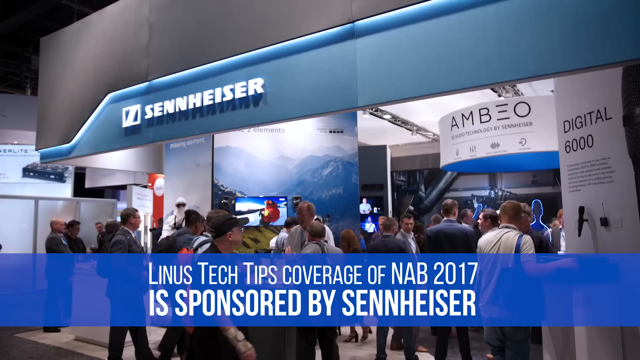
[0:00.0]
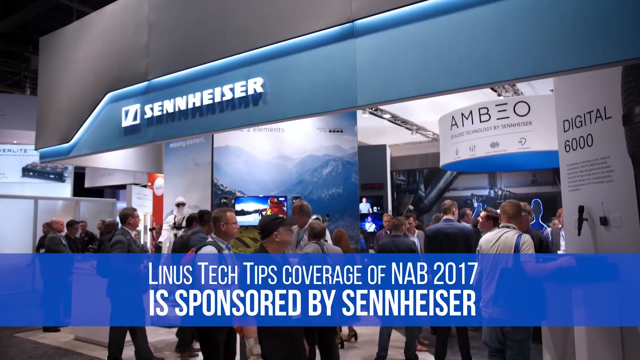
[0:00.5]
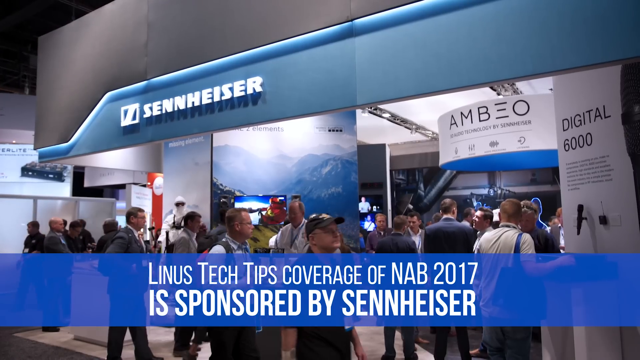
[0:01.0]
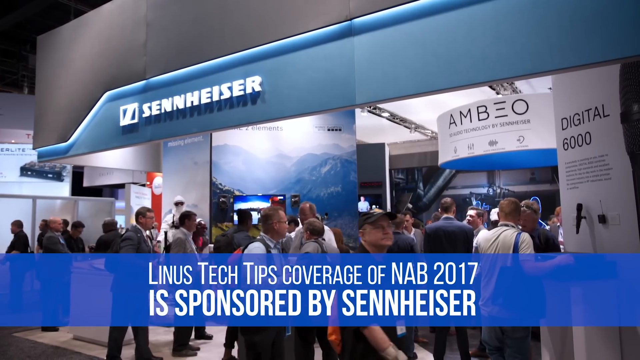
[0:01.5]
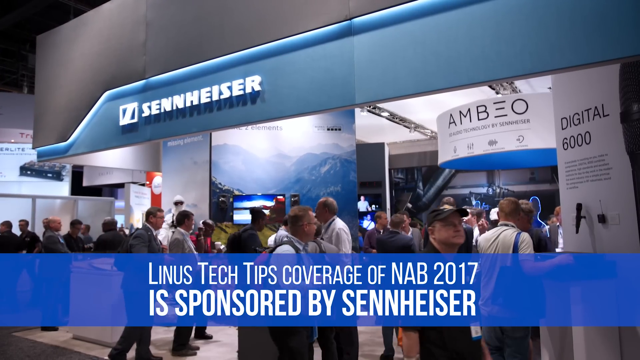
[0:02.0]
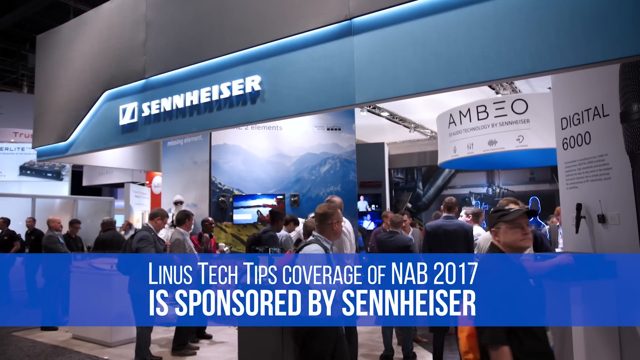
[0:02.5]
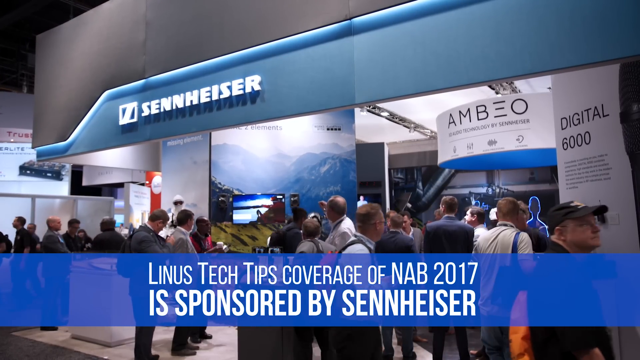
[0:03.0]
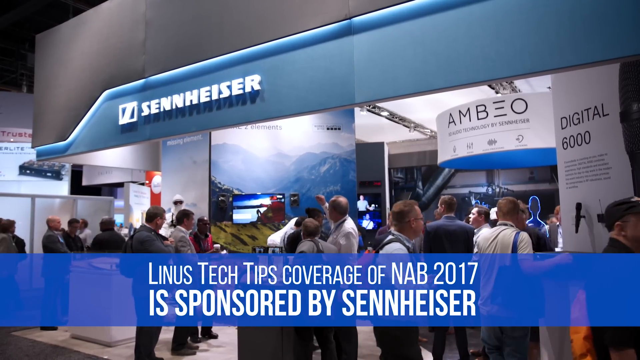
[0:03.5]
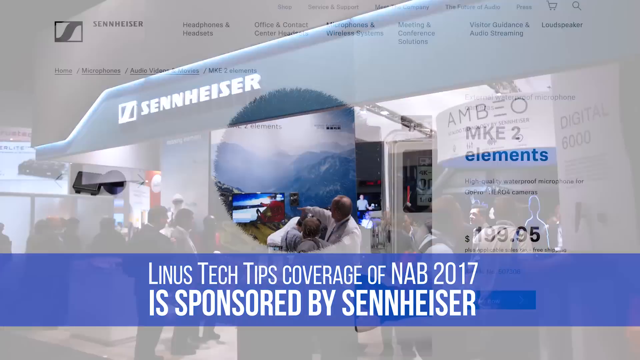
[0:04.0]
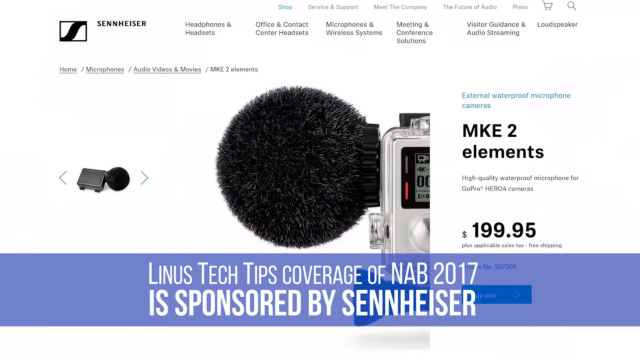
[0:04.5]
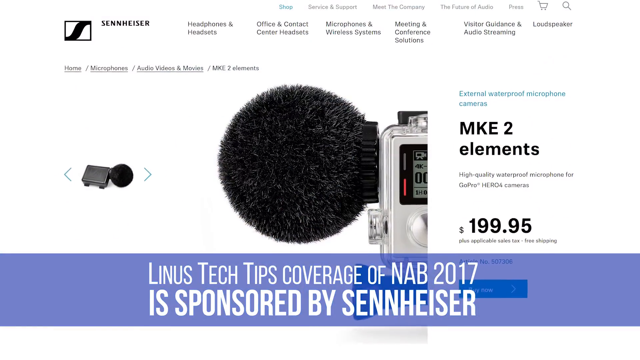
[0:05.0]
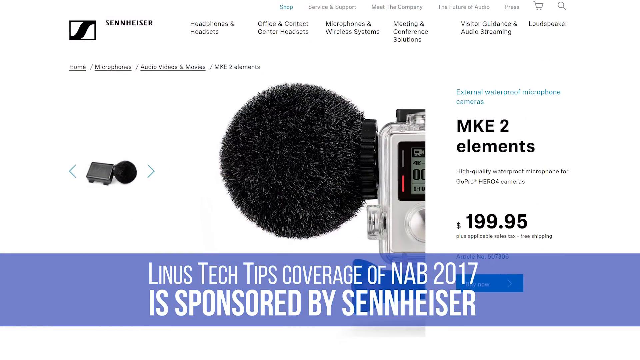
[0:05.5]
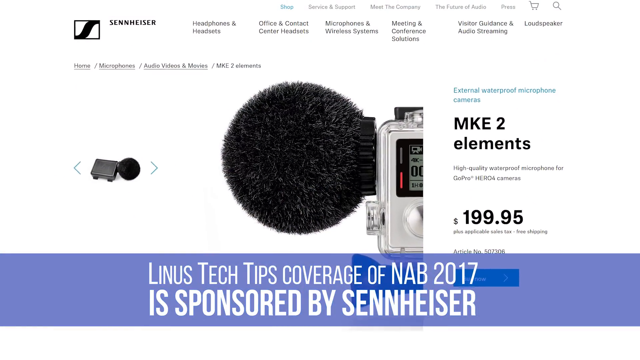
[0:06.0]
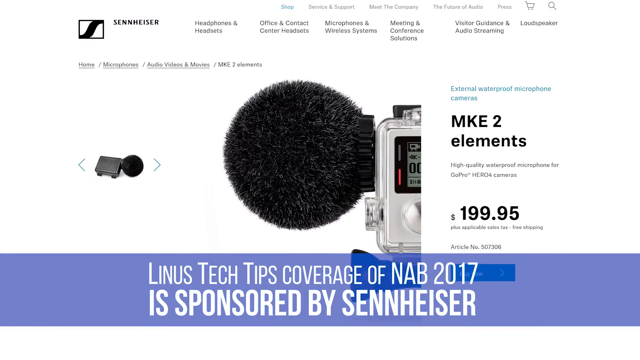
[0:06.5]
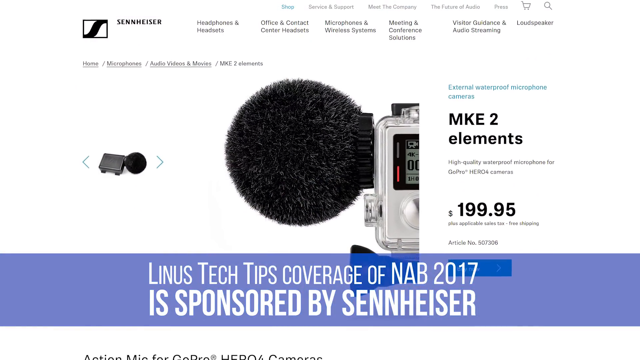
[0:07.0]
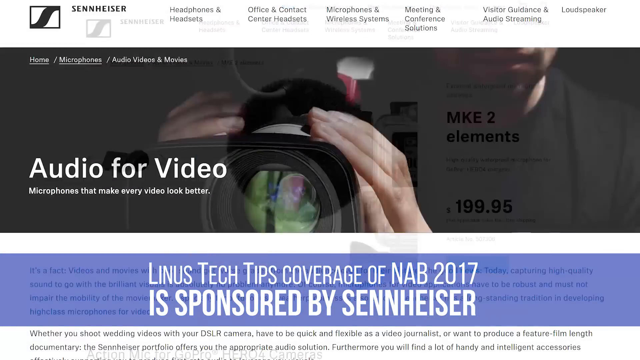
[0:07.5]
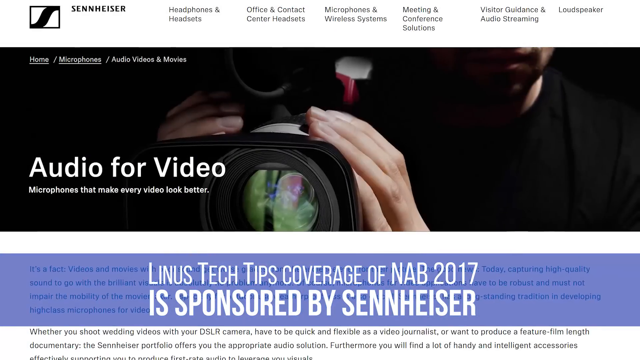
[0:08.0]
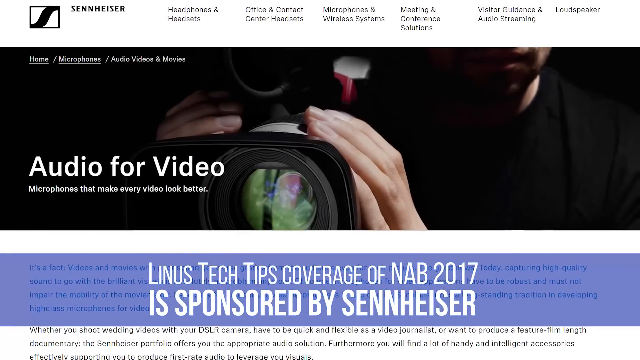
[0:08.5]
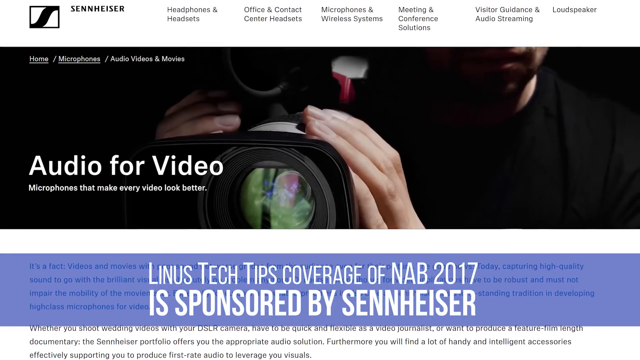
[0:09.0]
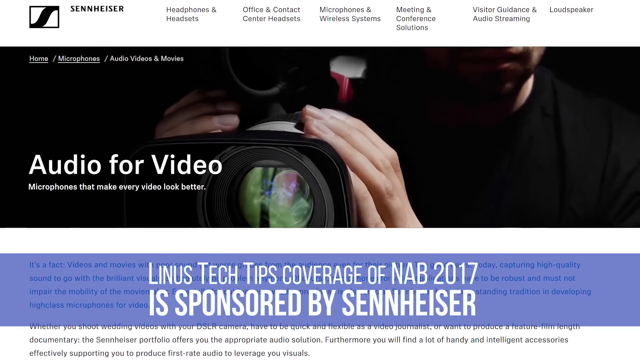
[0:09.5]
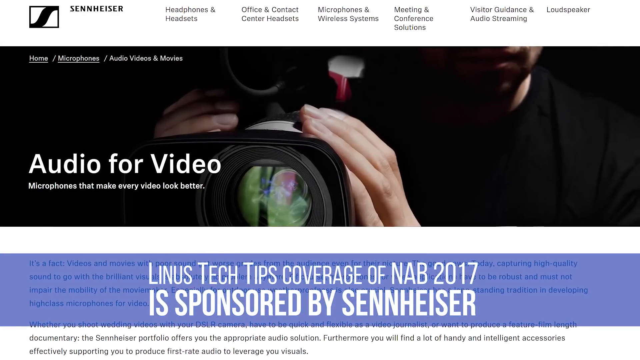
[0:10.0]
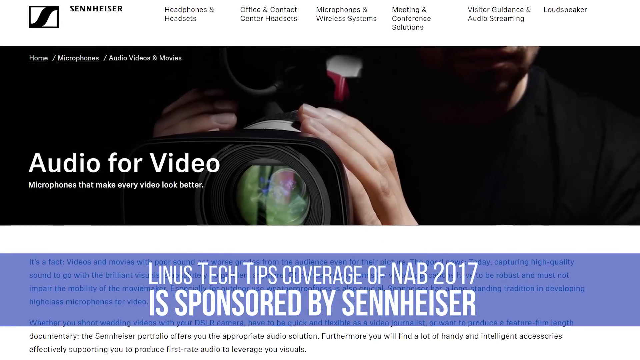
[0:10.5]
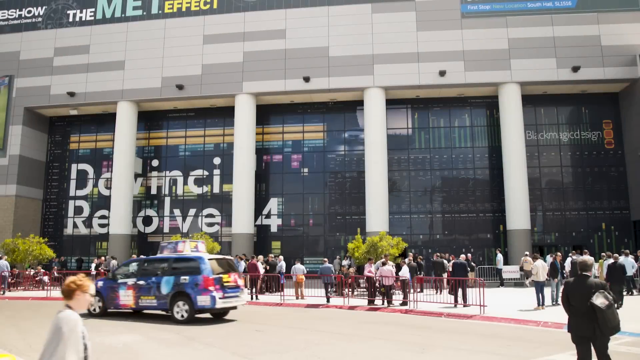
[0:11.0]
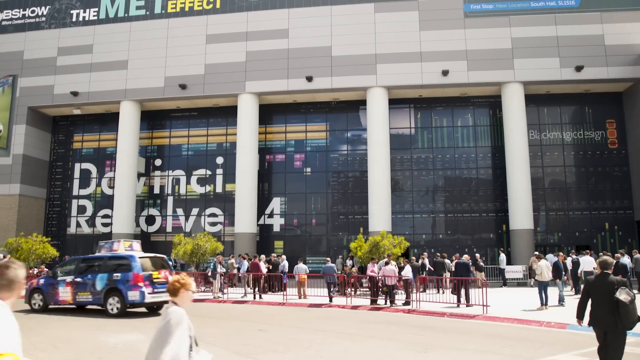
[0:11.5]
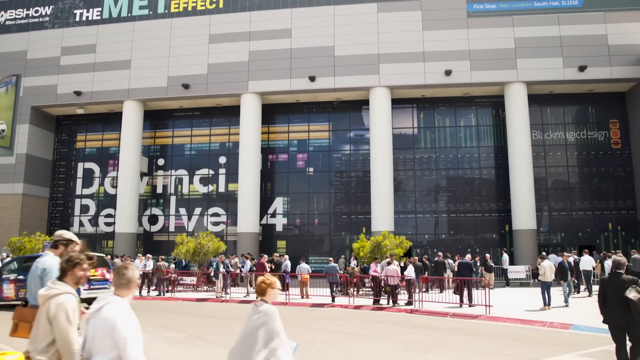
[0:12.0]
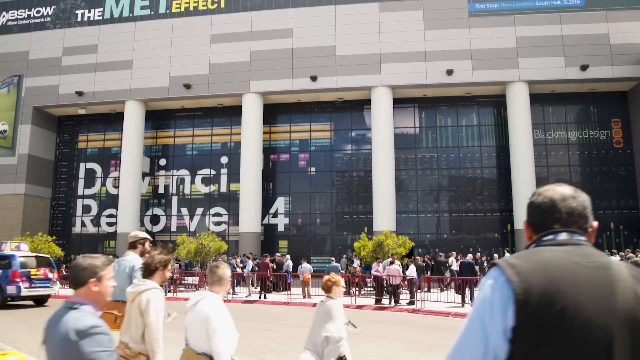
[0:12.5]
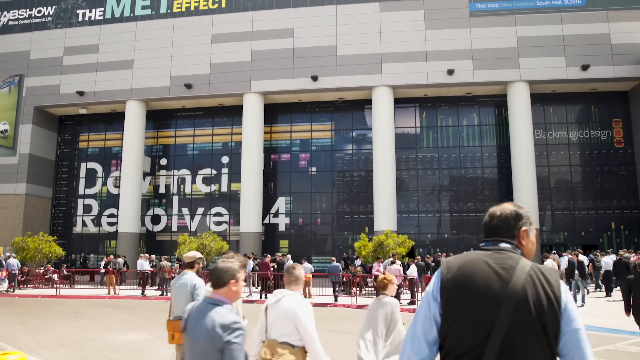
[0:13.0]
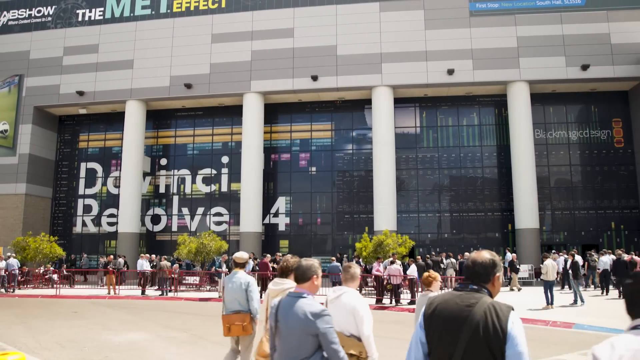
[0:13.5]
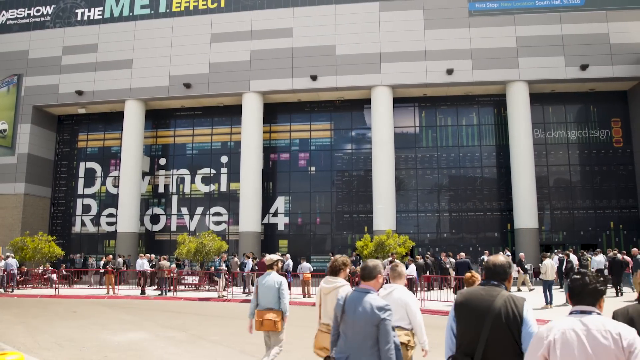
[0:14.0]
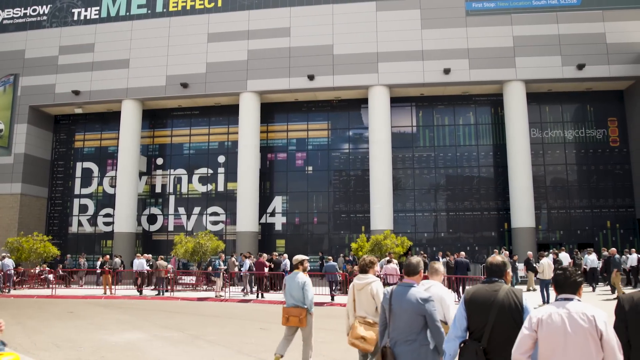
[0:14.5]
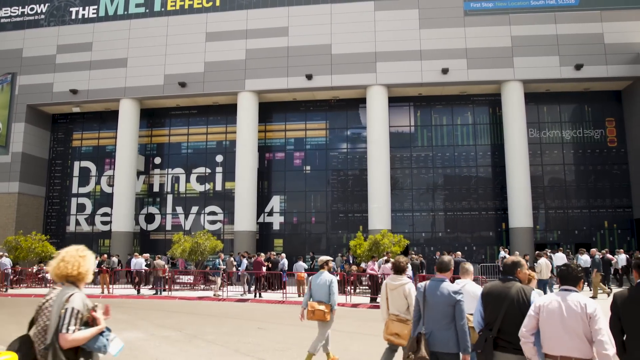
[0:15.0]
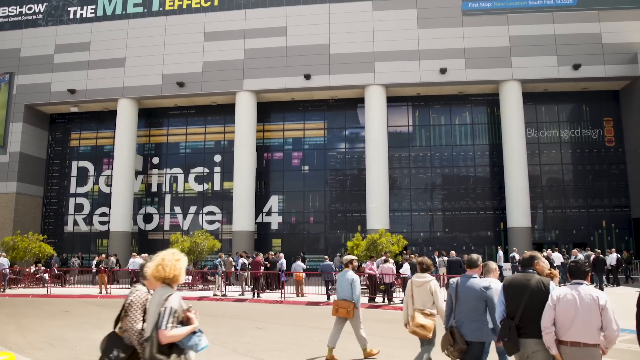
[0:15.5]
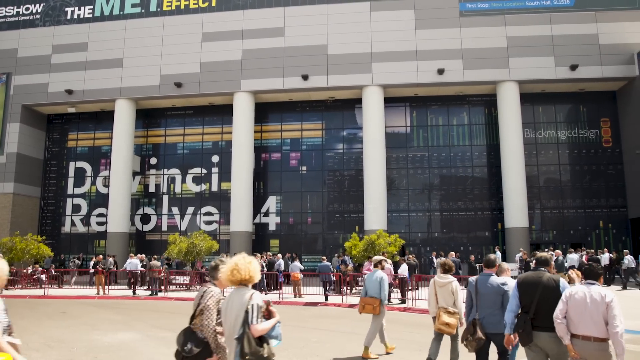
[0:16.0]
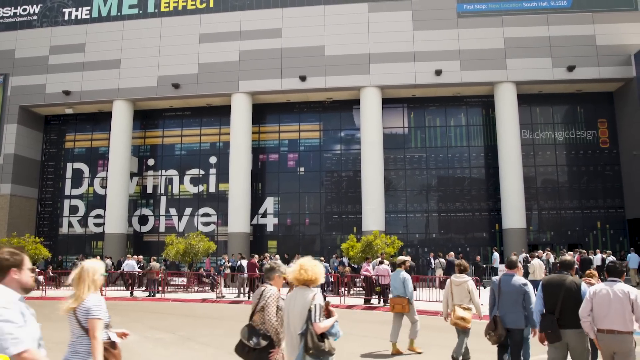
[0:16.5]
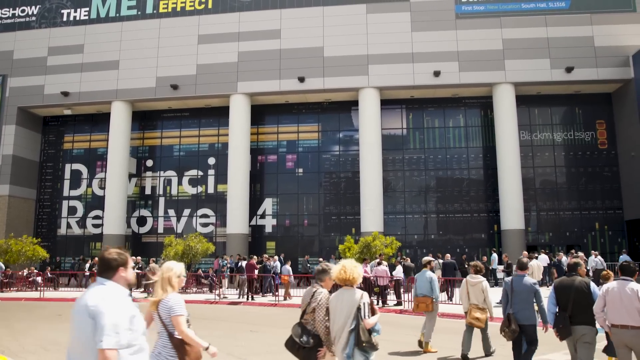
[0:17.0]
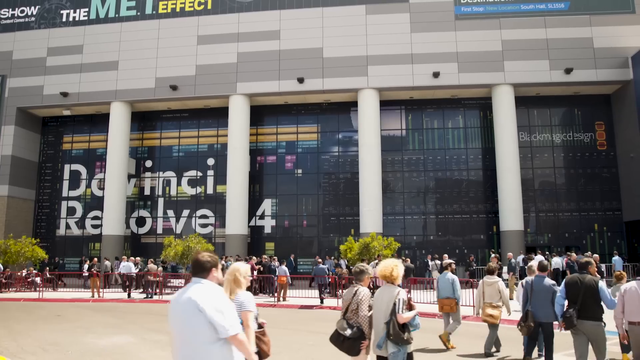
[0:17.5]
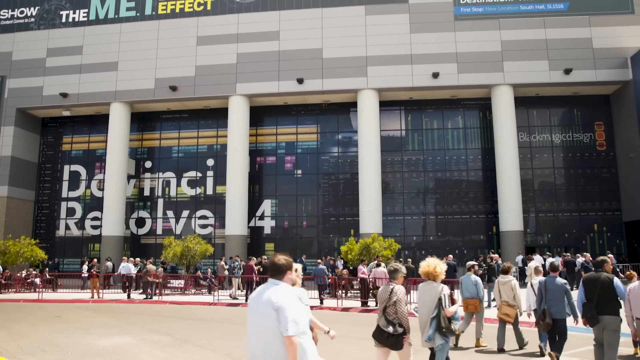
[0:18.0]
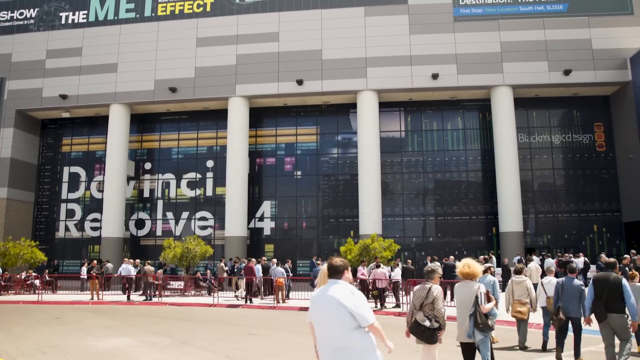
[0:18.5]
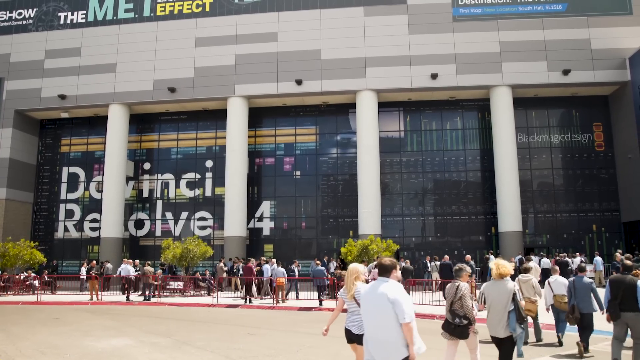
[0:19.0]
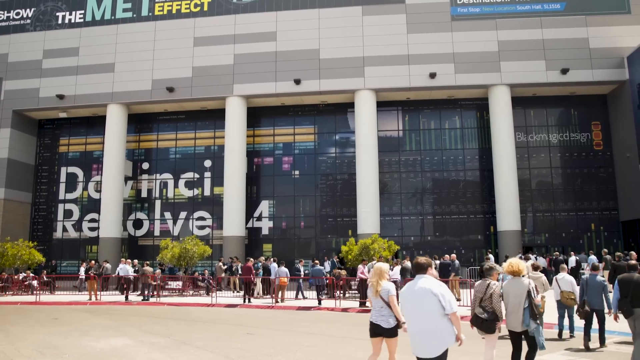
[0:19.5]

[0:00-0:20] The video appears to be about Linus Tech Tips coverage and is sponsored by Sennheiser. People seem to be gathered in a main hall, waiting for the day's presentation, apparently for the person who is going to present. Outside a big building, men and women cross the roads. The company seems to be a big one, and outside it seems hot, with people out on a sunny day. The road they cross seems big and seems to be busy.